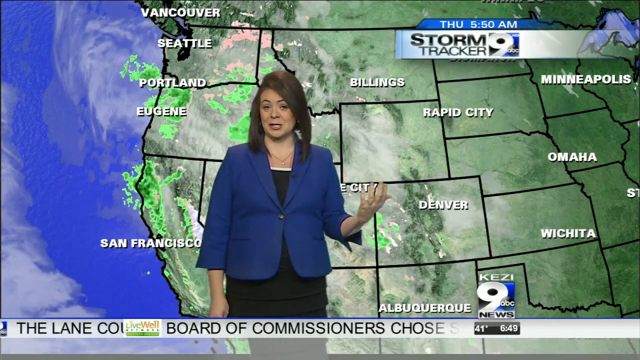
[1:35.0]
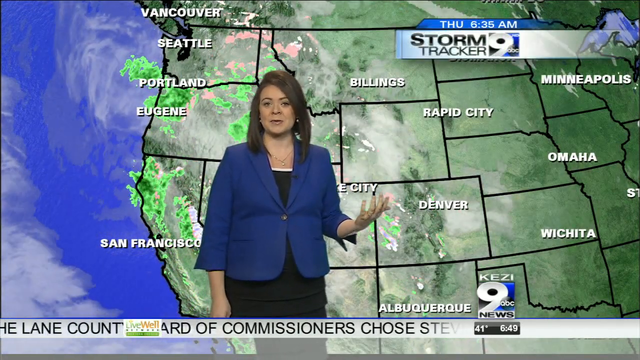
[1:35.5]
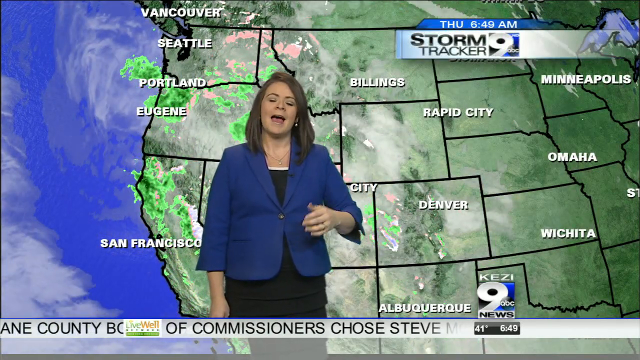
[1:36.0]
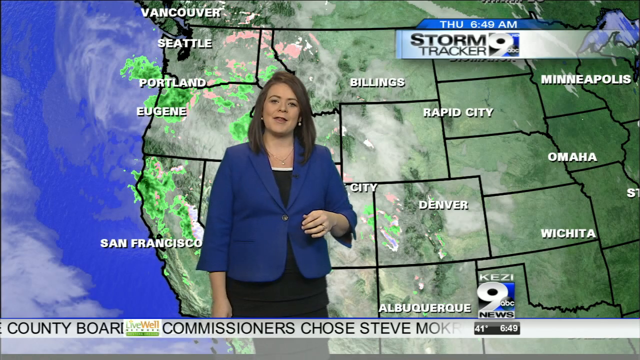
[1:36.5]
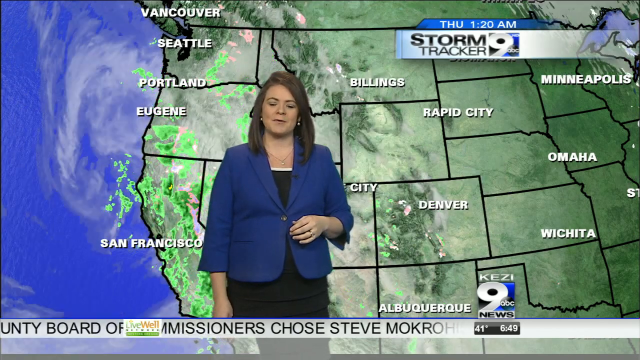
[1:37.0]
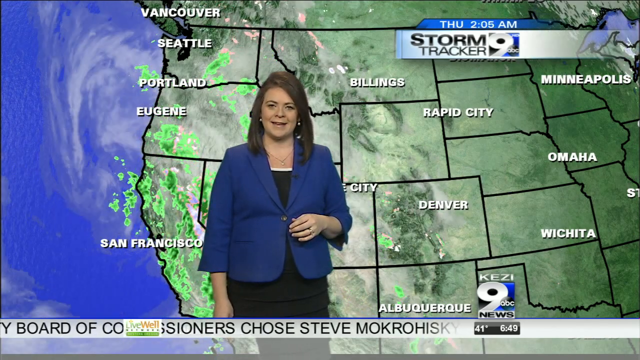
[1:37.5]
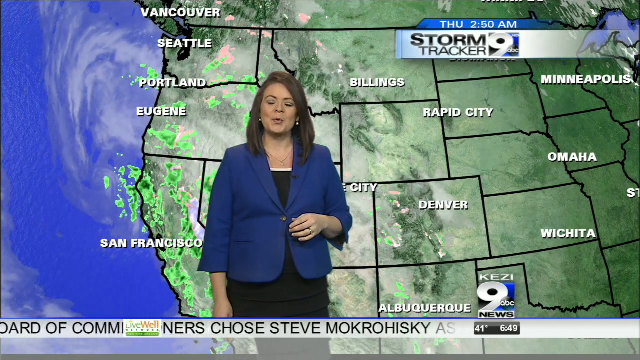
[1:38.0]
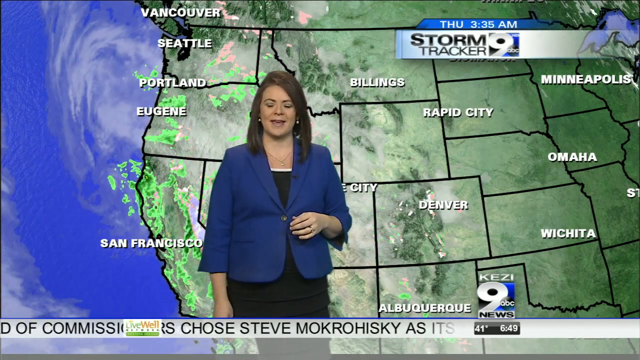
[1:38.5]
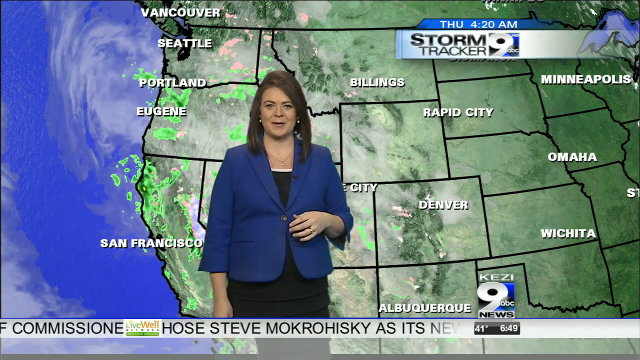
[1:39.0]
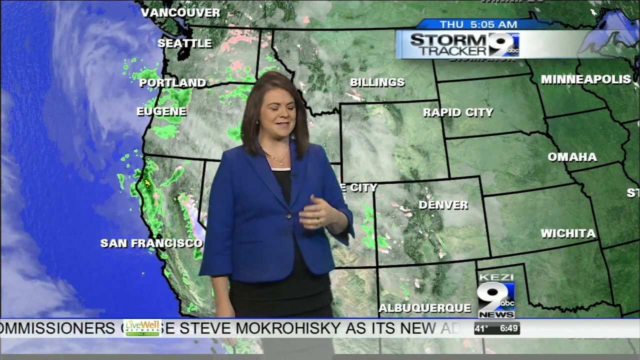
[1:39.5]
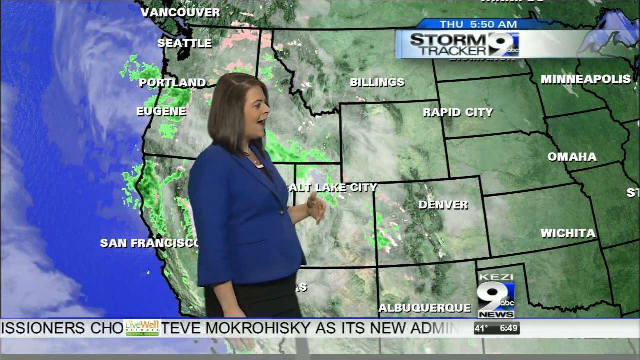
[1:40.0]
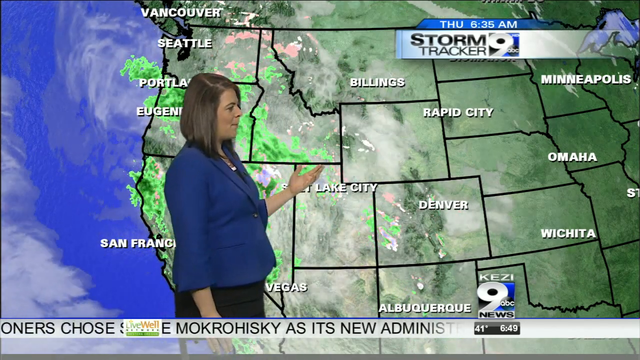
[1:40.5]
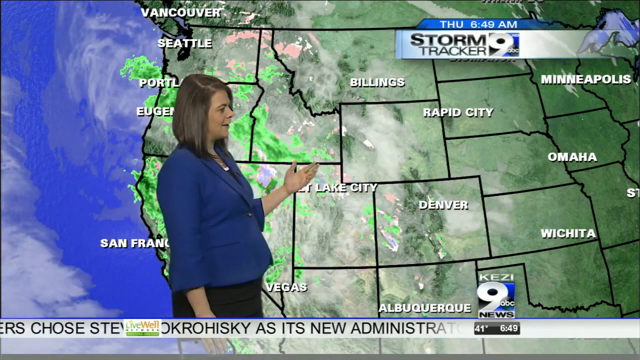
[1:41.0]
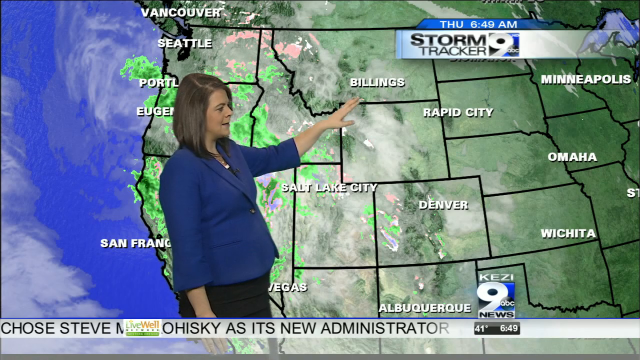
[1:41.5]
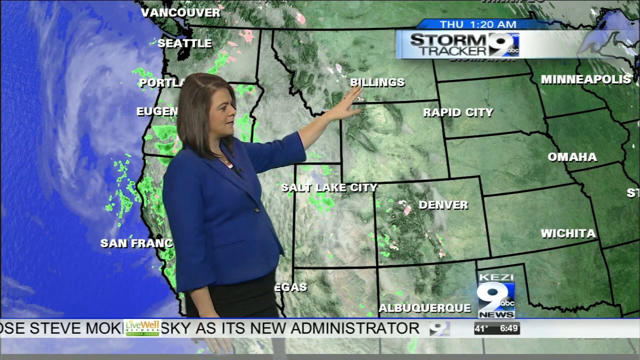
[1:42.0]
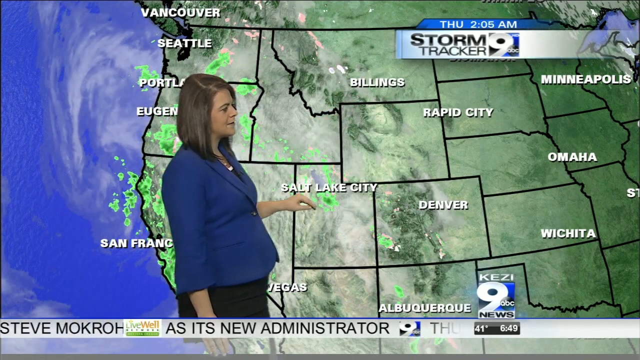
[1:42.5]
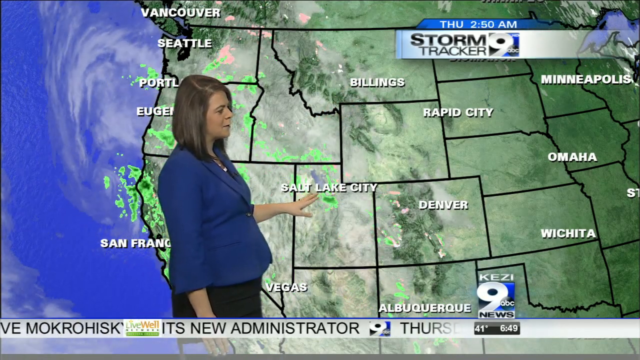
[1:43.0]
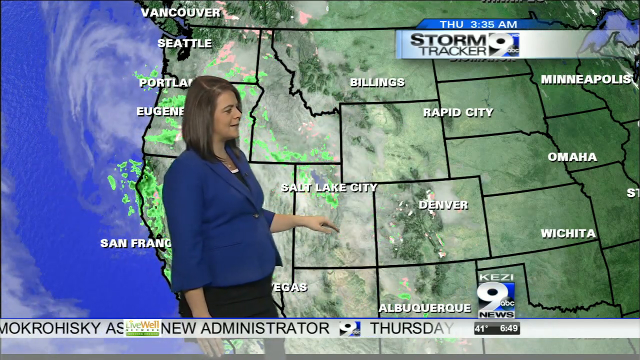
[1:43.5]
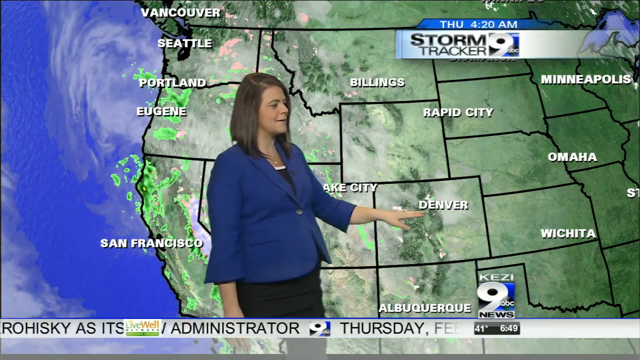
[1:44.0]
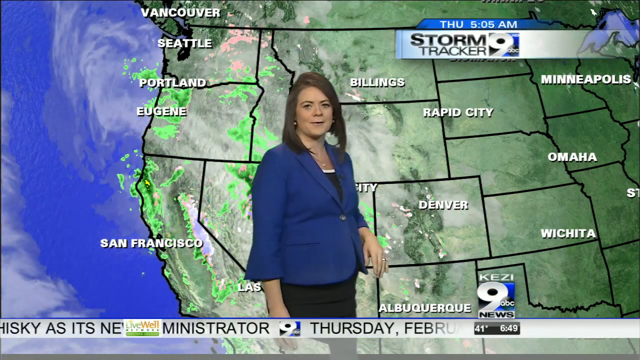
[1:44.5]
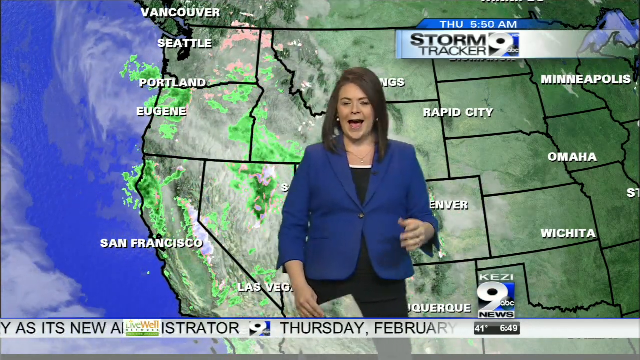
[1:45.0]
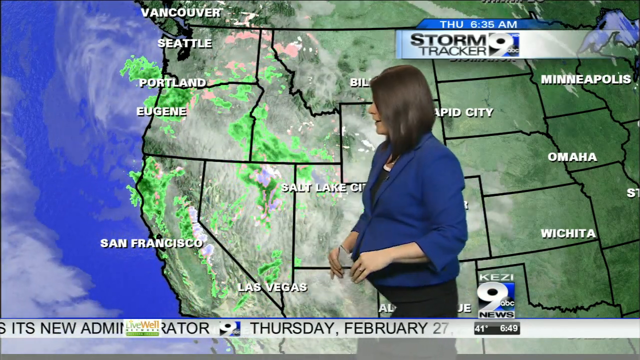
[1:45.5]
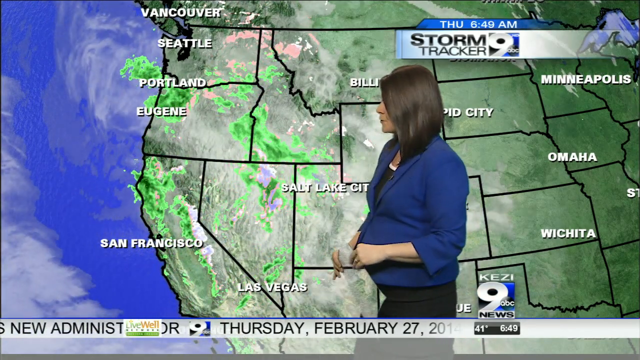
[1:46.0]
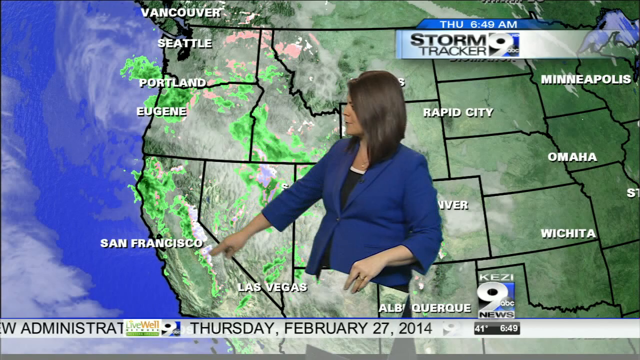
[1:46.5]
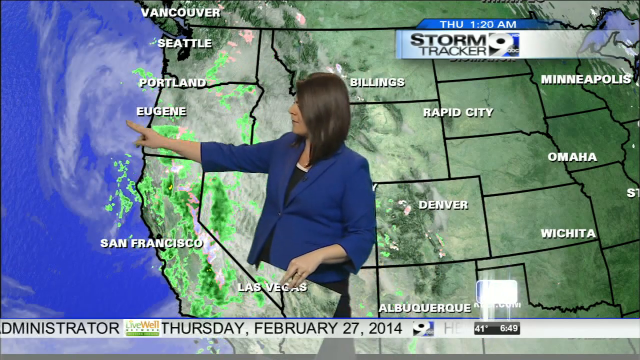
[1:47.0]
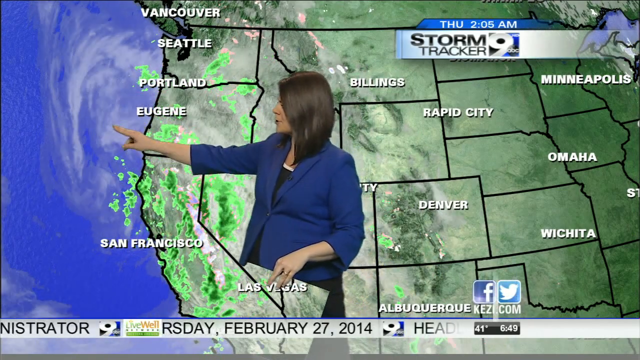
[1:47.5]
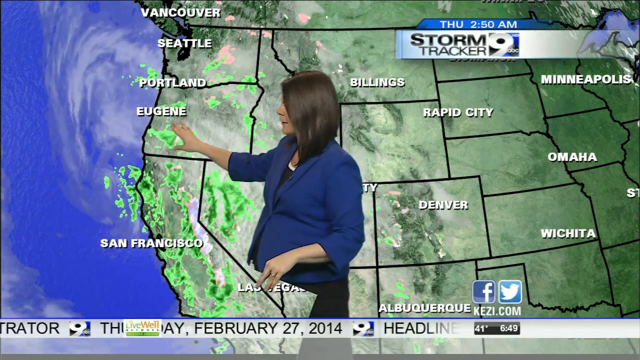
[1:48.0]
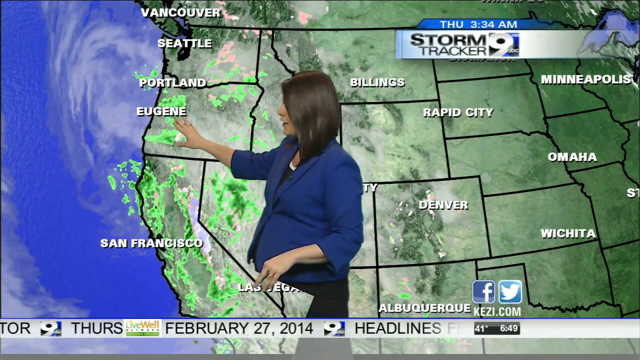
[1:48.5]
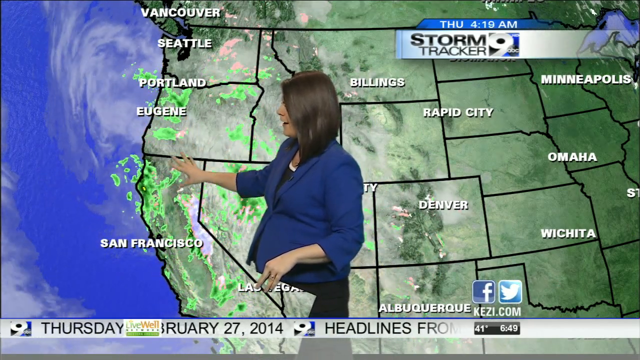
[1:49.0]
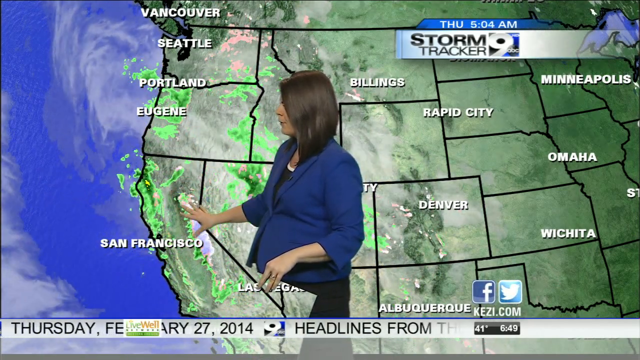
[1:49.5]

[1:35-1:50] A fairly standard news station weather report is on screen. A green map of the United States has black outlines for the states and bold white lettering for various city names. A weather system shown in green, yellow and red coloring to indicate storm intensity moves through the west coast region, which the map is largely focused on. There are some swirling clouds, and blue coloring for the water off to the side. A female meteorologist in a blue suit jacket and black dress stands in front of the map, pointing to various city names and storms, talking toward the camera and then turning to point at things. The 9 ABC News logo appears in the upper right and bottom right corners of the screen, and a ticker runs across the bottom with headlines and date and time information.